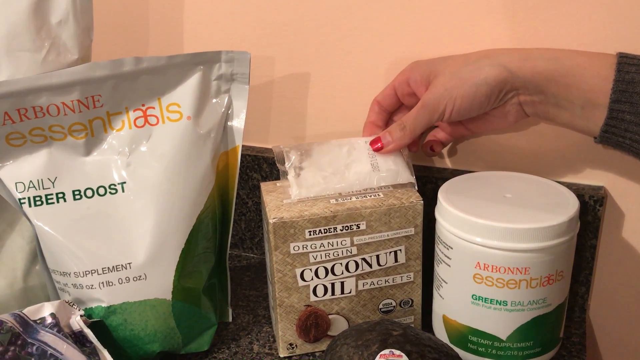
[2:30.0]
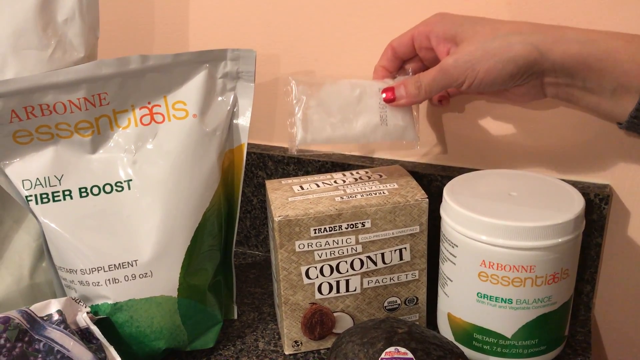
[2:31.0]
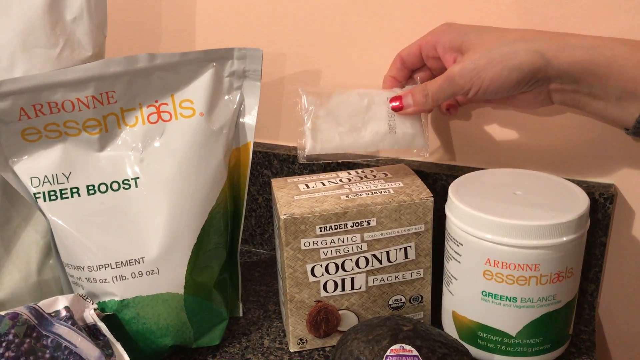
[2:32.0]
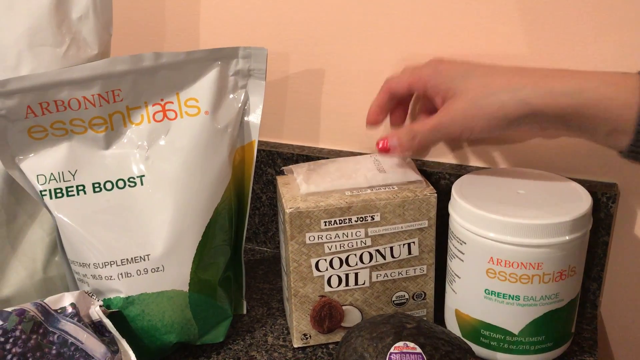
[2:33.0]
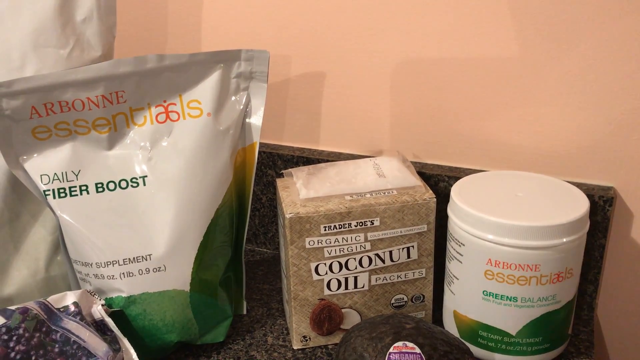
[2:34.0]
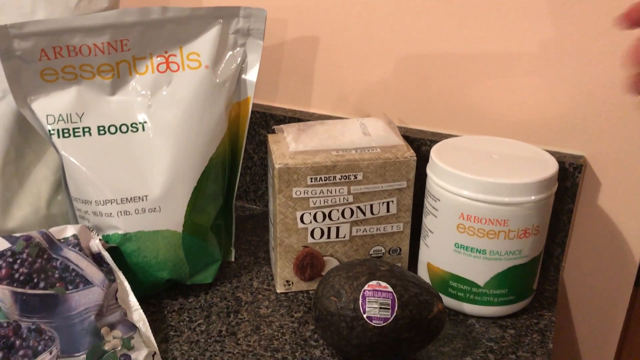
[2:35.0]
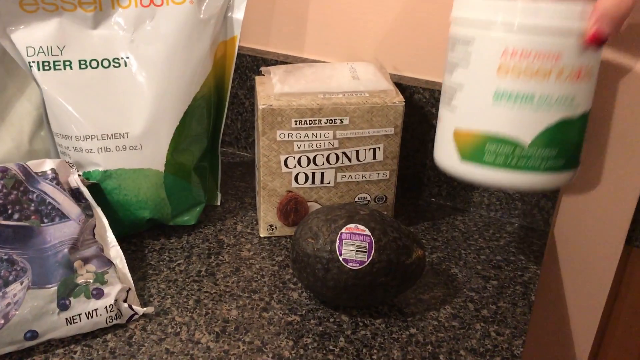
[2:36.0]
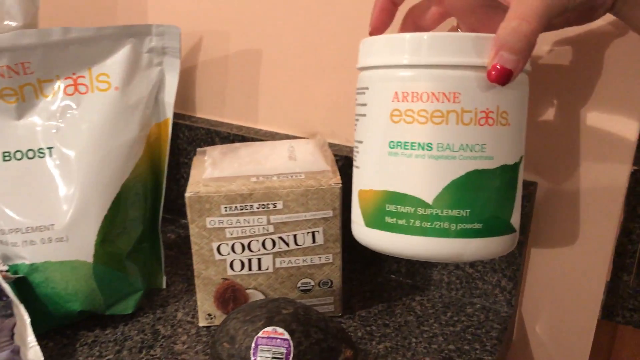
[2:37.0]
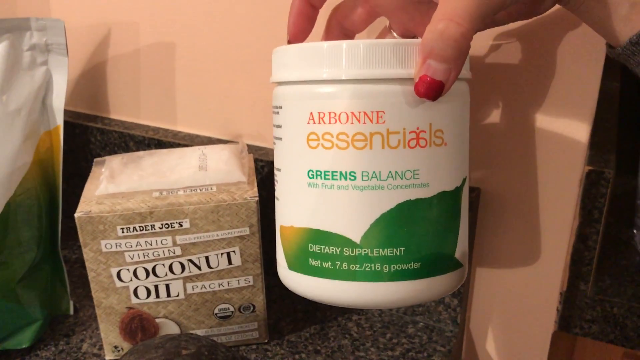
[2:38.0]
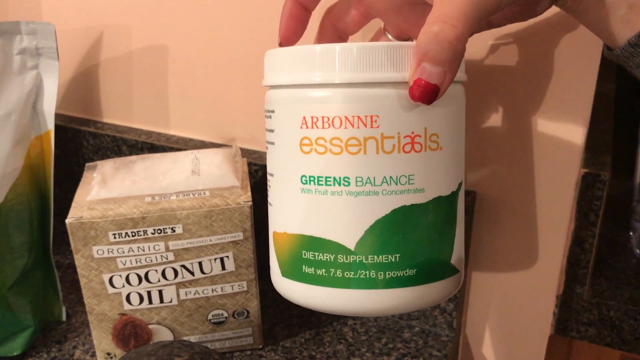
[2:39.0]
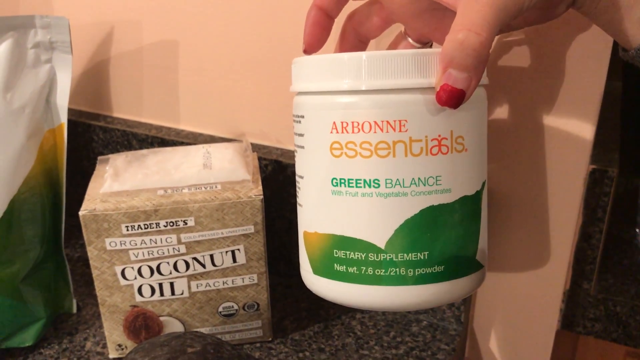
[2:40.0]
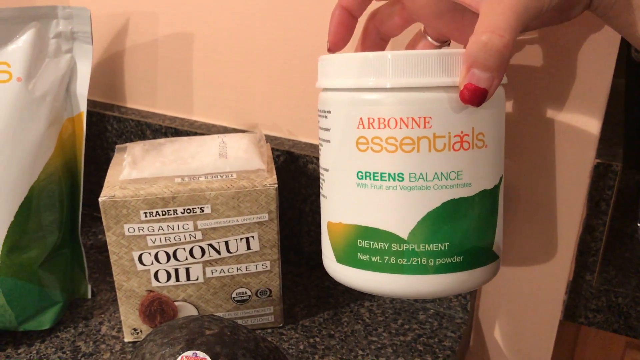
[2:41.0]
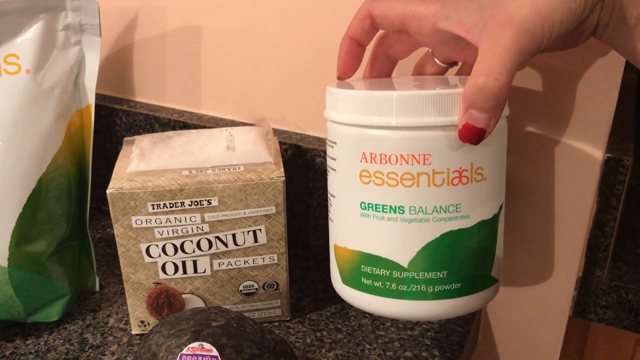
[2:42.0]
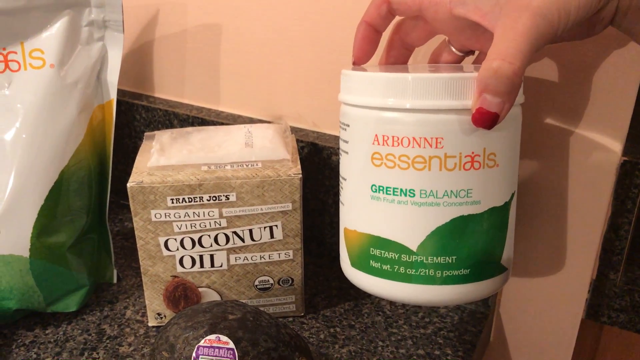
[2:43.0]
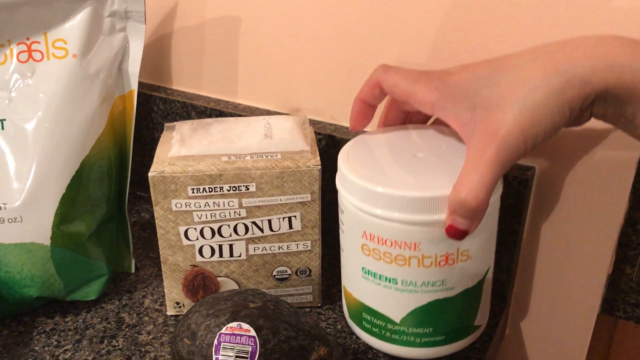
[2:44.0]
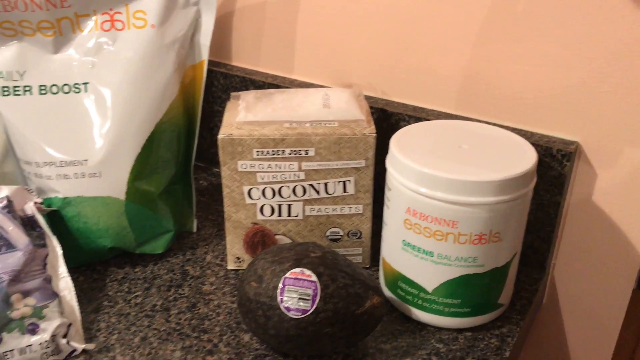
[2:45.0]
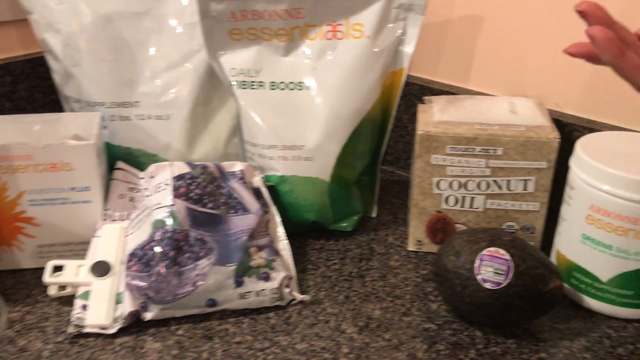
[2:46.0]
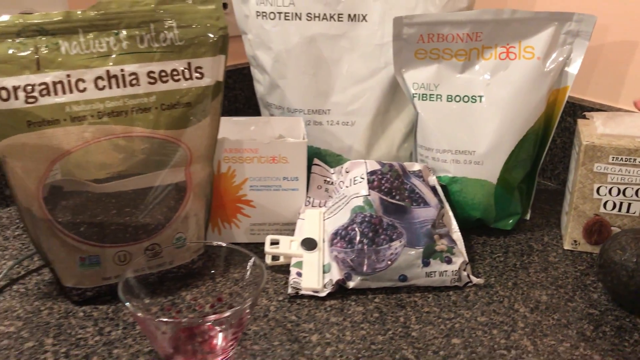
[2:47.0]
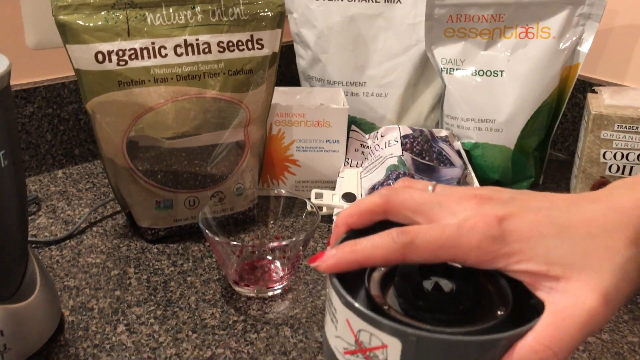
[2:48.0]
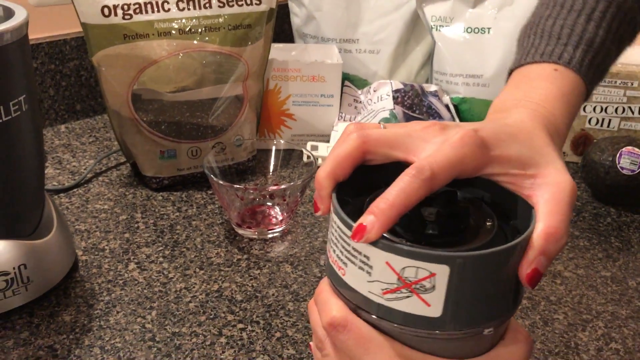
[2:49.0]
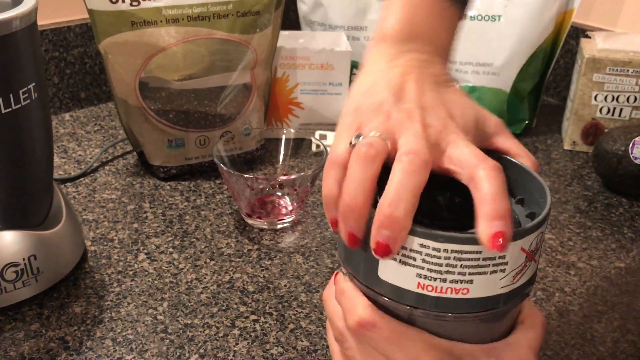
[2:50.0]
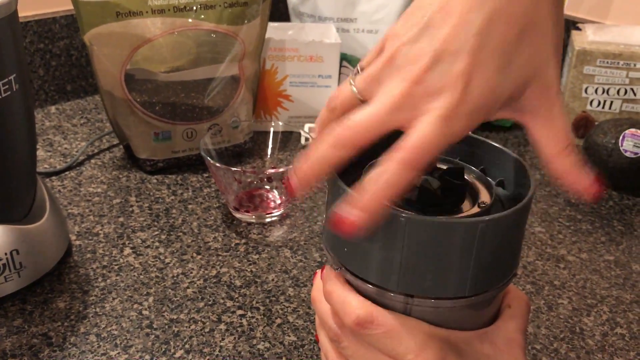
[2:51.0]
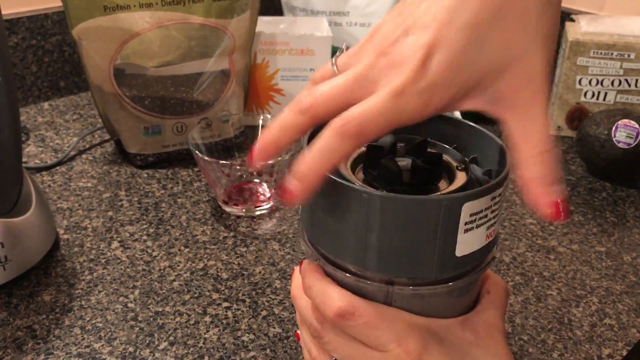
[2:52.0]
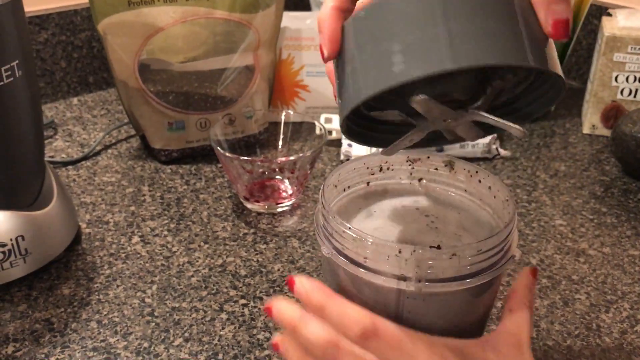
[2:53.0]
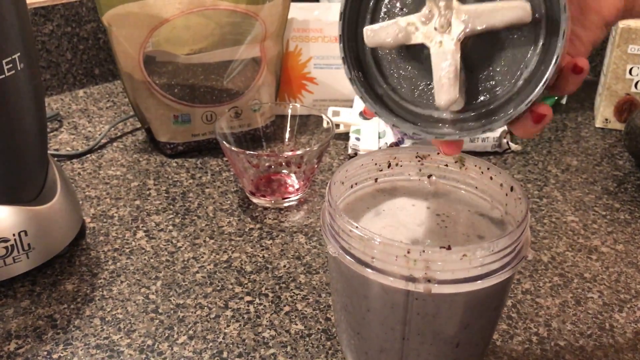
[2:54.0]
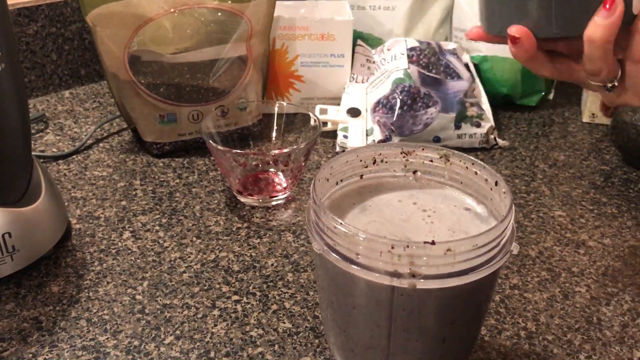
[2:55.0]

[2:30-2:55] The woman lifts the organic virgin coconut oil packet from the top of the box and holds it. Next she lifts a white bottle reading "green balance" and brings it closer to the camera; it reads "dietary supplements" with a net weight of 218 grams powder. The bottle is mostly white, with green, yellow and red on some words. After placing the bottle down, she opens the glass jar with the blended ingredients, which have been well blended together into a liquid with a brownish mixture of colours.